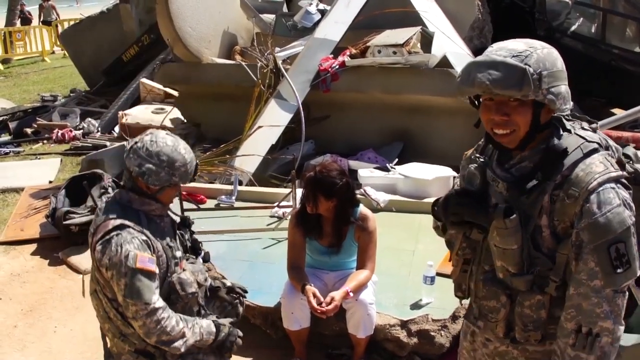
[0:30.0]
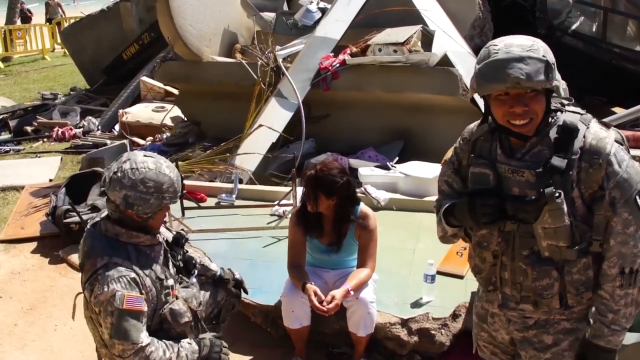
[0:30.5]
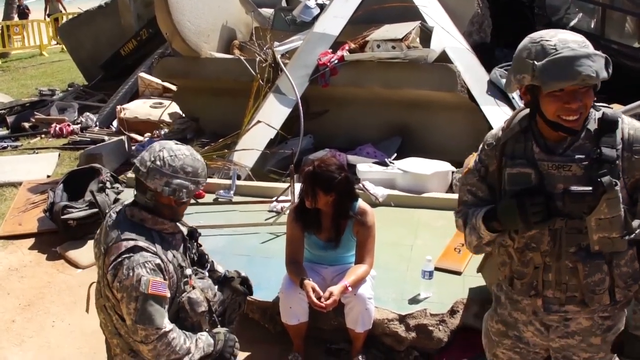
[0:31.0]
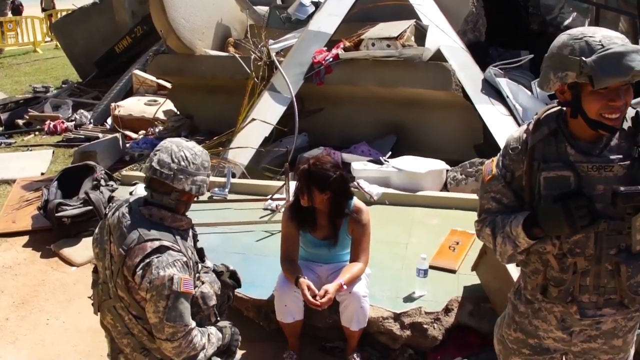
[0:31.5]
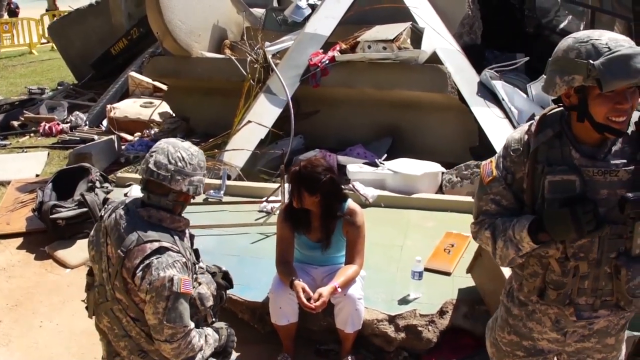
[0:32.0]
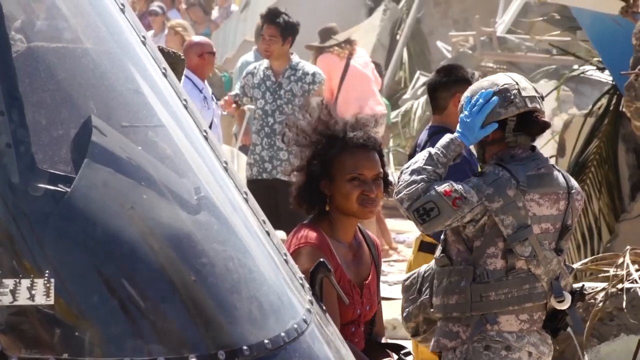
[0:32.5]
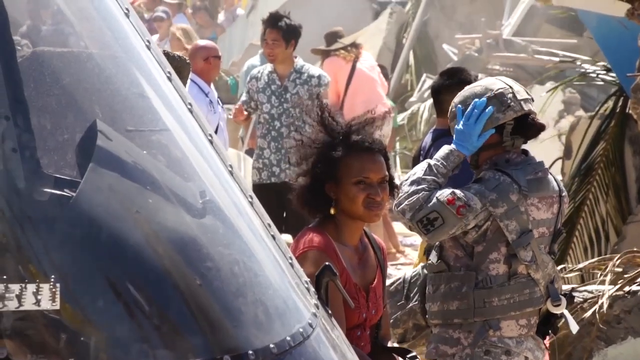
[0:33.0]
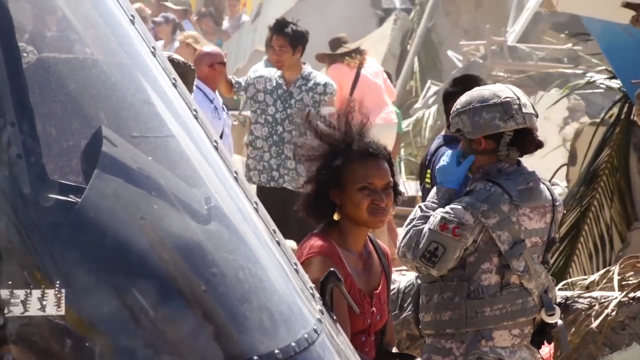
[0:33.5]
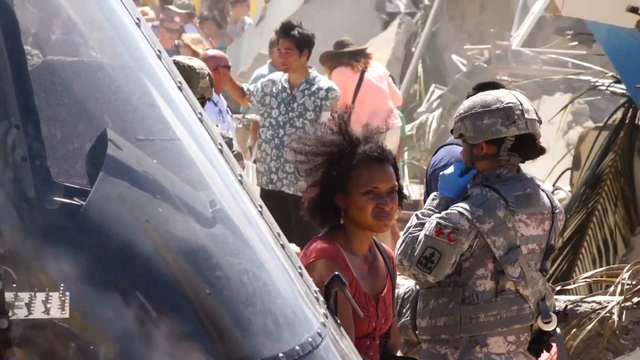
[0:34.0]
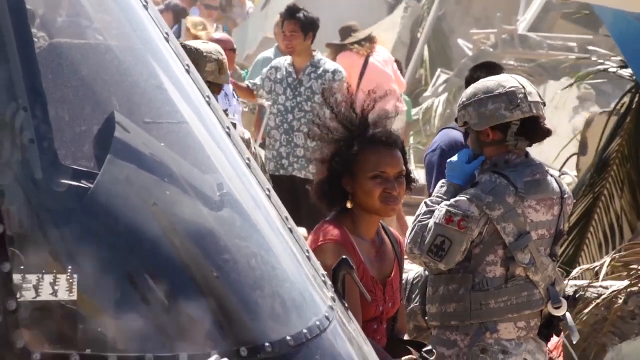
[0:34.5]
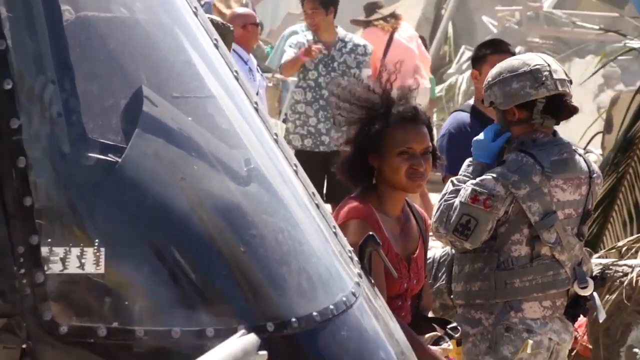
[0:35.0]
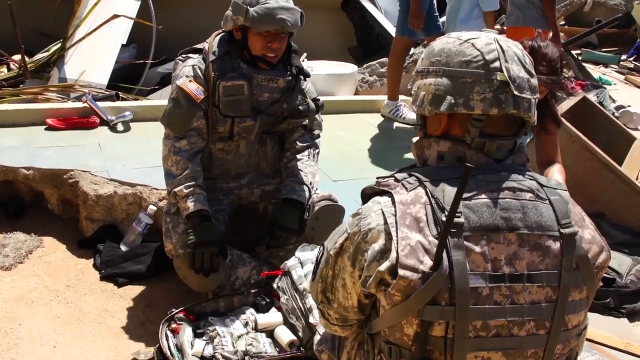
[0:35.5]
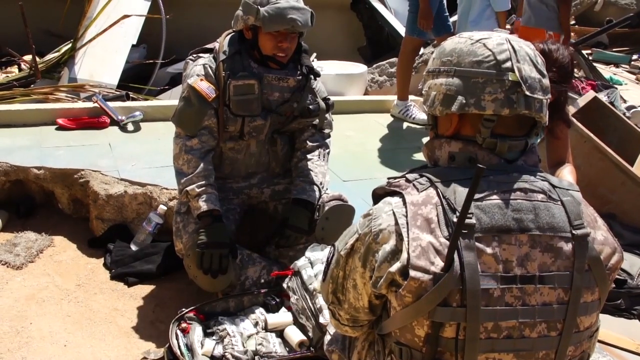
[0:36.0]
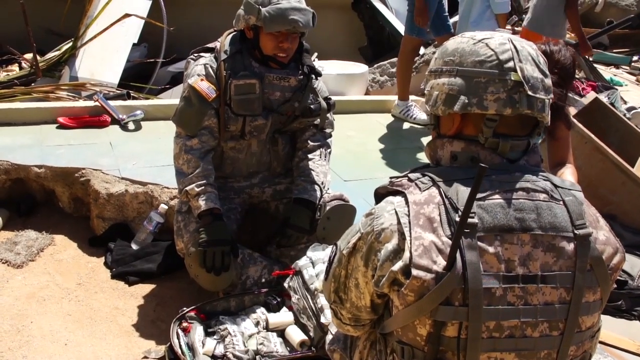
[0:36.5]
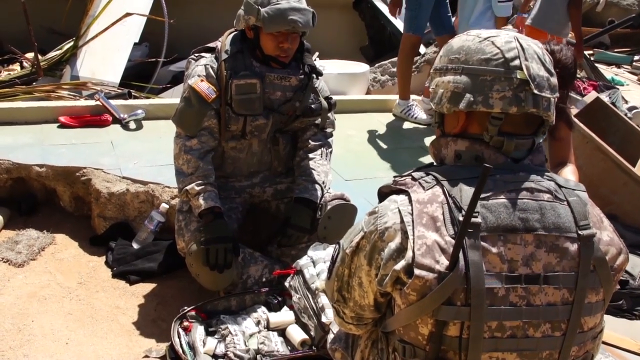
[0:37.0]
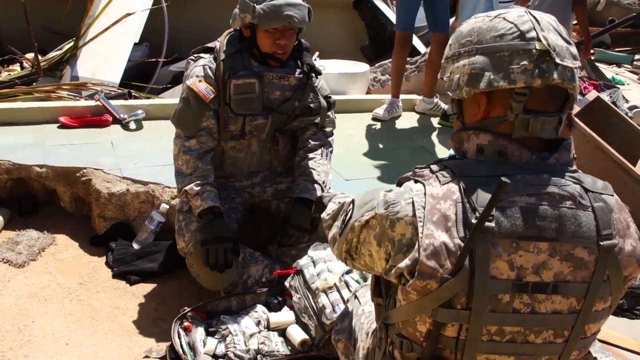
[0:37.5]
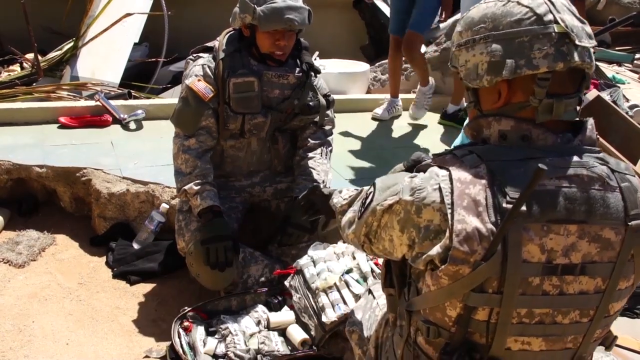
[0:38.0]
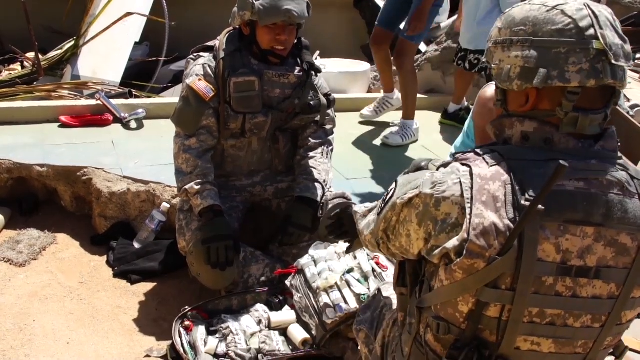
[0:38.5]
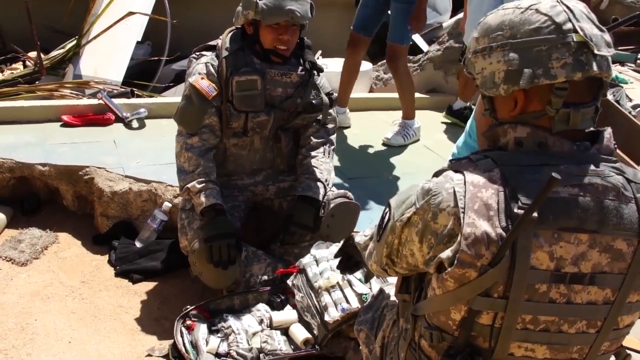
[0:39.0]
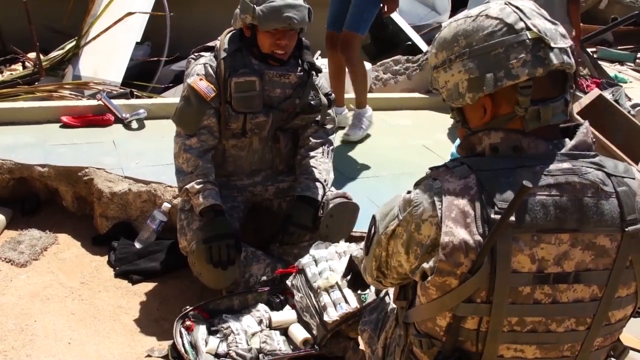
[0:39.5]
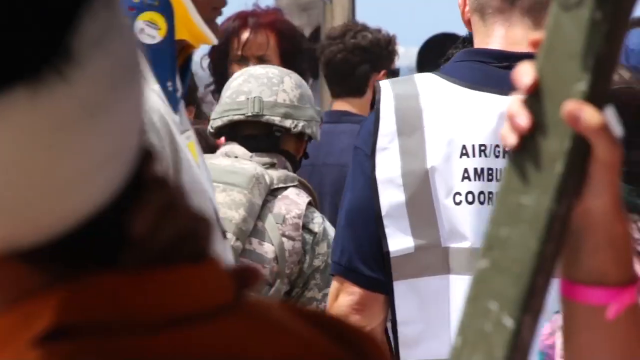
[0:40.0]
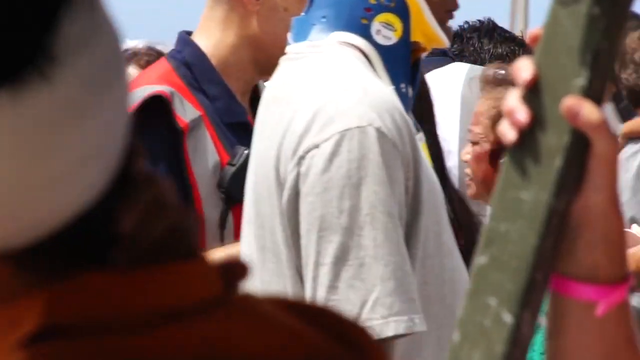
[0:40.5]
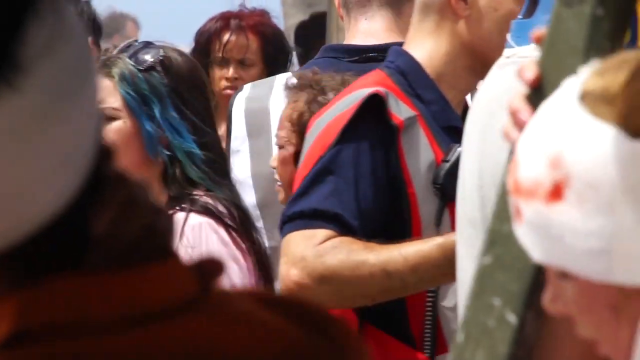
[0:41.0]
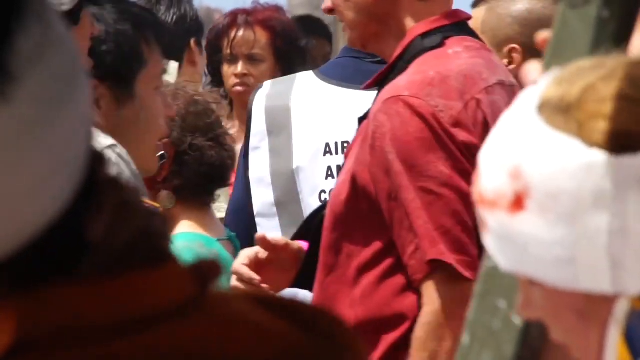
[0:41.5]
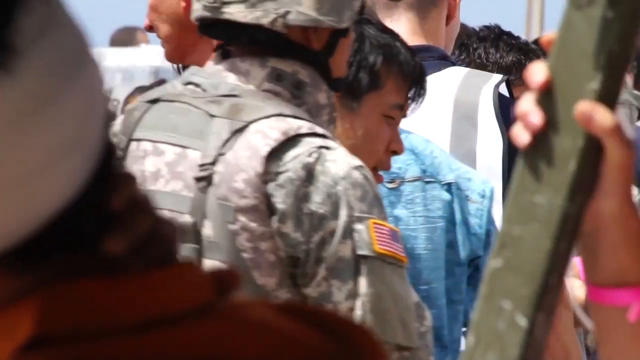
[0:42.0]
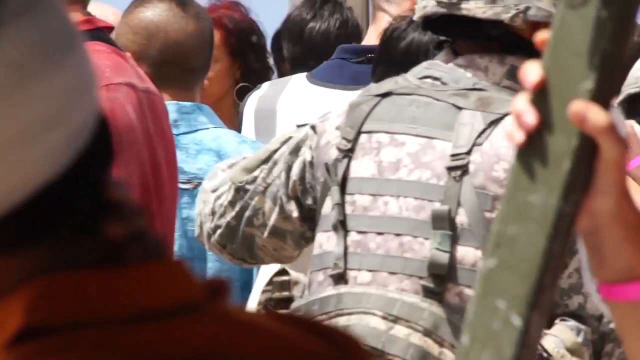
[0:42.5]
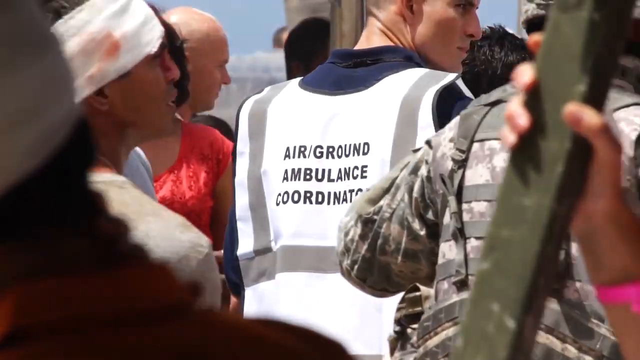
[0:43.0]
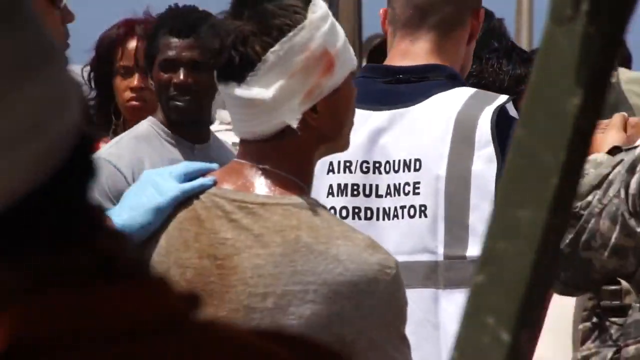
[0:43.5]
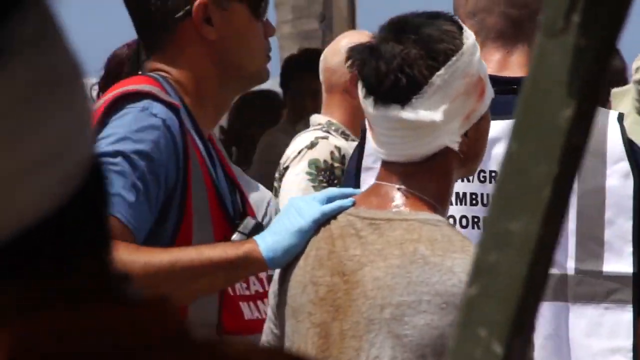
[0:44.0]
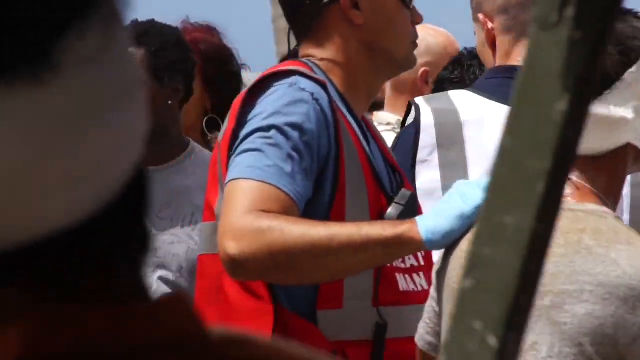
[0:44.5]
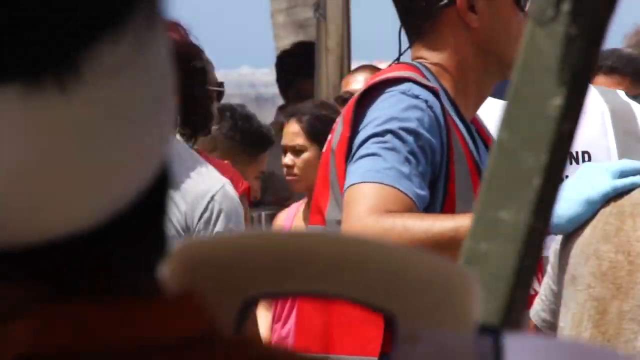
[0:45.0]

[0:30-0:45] Two soldiers are near what appears to possibly be a helicopter on its side. They stand apart from each other, with a woman sitting down between them. One soldier smiles and looks around while the second talks to the woman. The video cuts to another scene, which looks like another helicopter up close, where a female soldier wearing latex gloves stands next to another woman who is sitting down, kind of facing her; the woman is apparently a patient and the soldier apparently renders some sort of aid. There are a lot of people in the background, but they are not in focus enough to see what they are doing. Next, two more soldiers have a conversation with each other over an open book sack that holds rolls of gauze and various other medical supplies. The camera cuts again to a crowd of people. A soldier walks with a younger man through the crowd. One man has a bandage on his head with a little blood coming through on the side, and a man in a red vest, like emergency personnel, has his arm on his shoulder, as if escorting him somewhere.